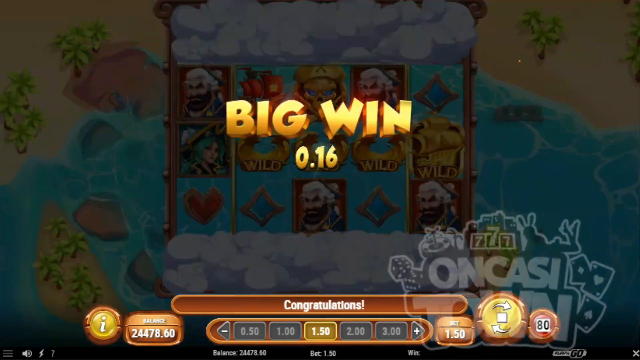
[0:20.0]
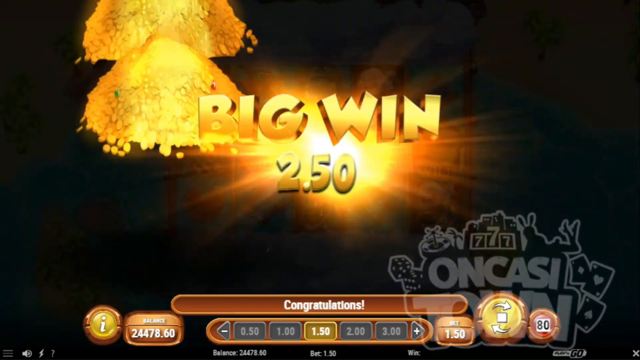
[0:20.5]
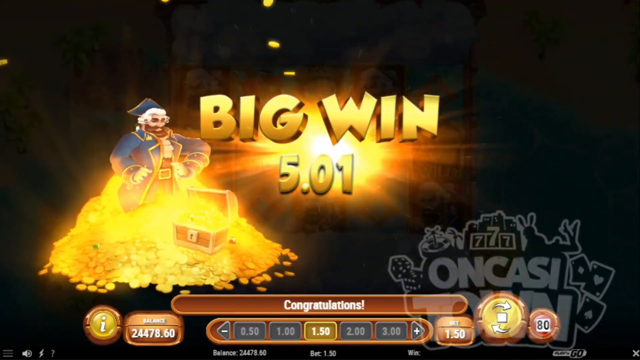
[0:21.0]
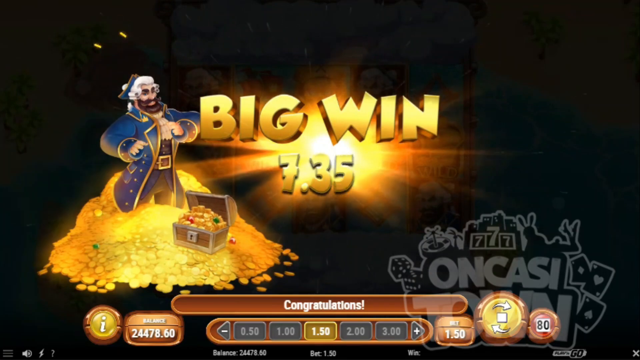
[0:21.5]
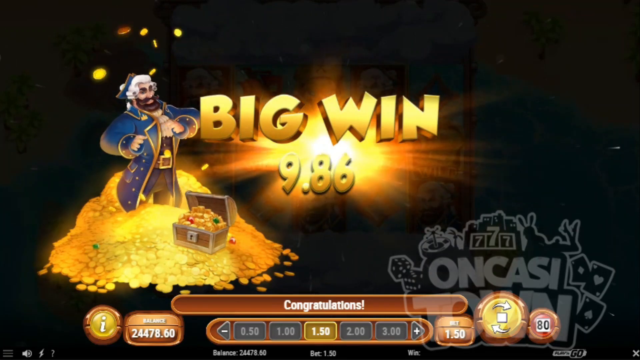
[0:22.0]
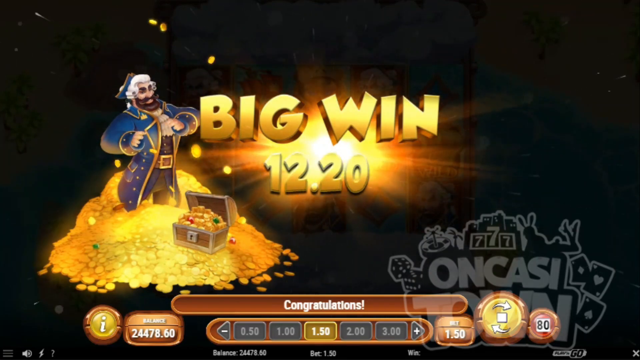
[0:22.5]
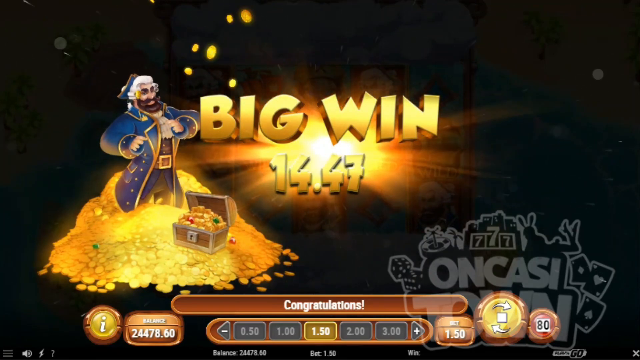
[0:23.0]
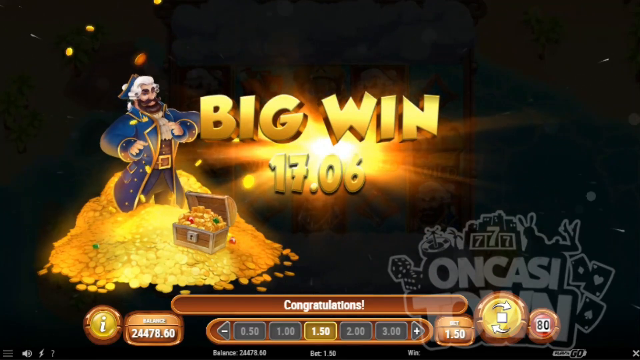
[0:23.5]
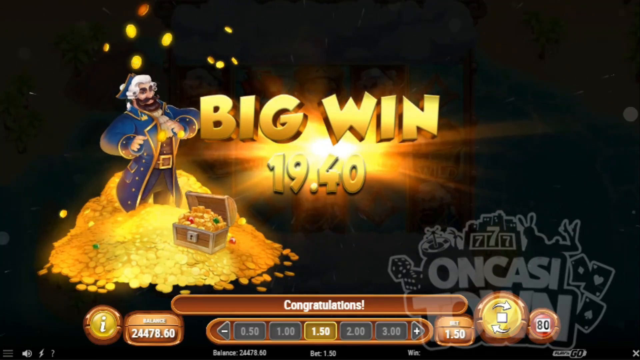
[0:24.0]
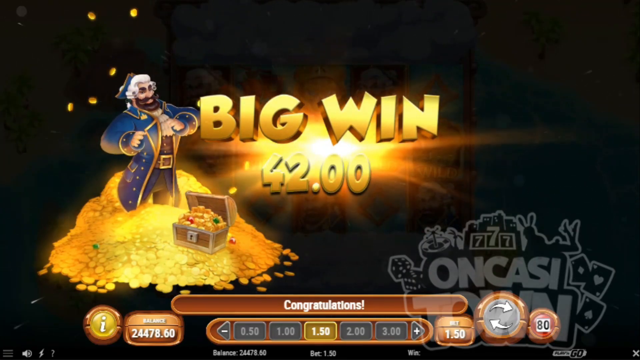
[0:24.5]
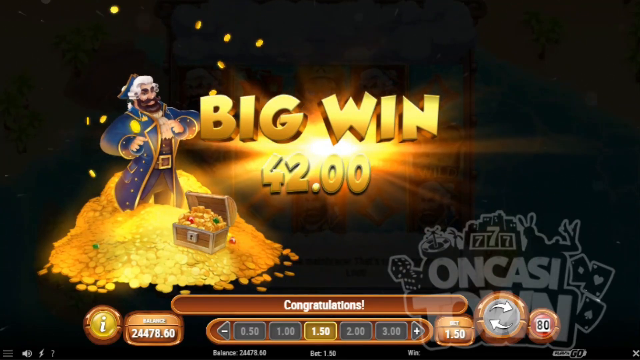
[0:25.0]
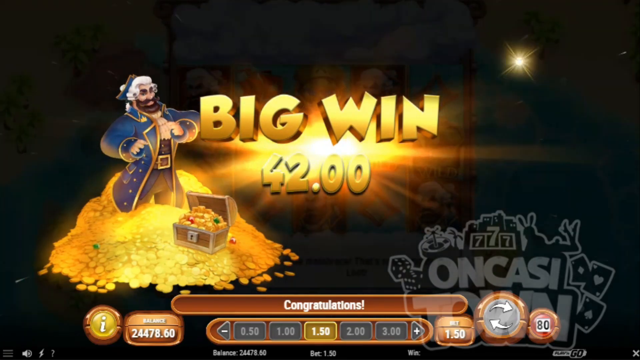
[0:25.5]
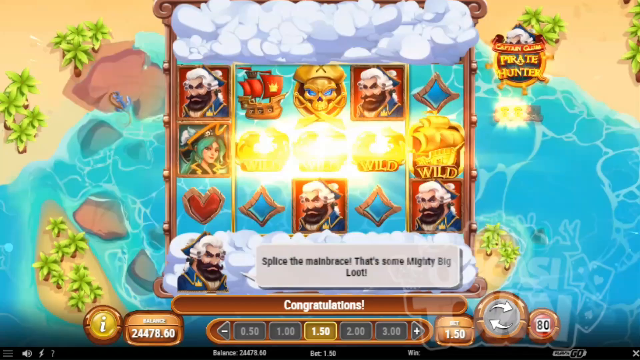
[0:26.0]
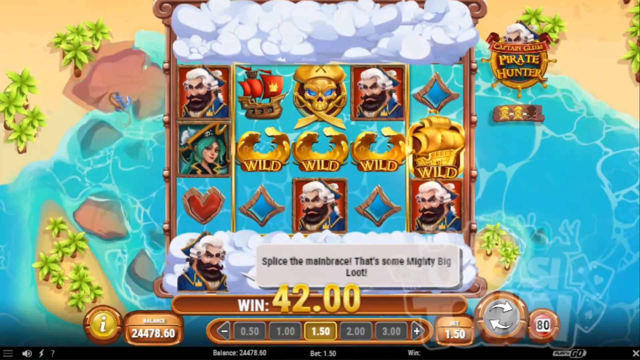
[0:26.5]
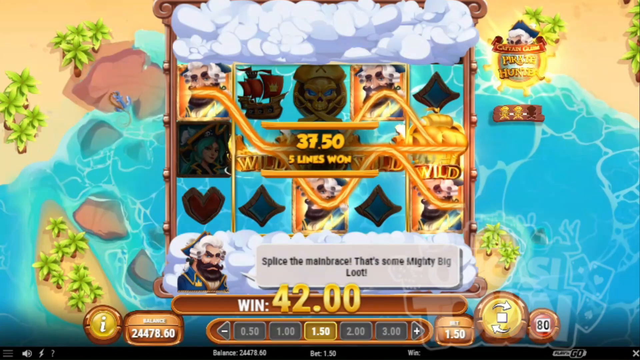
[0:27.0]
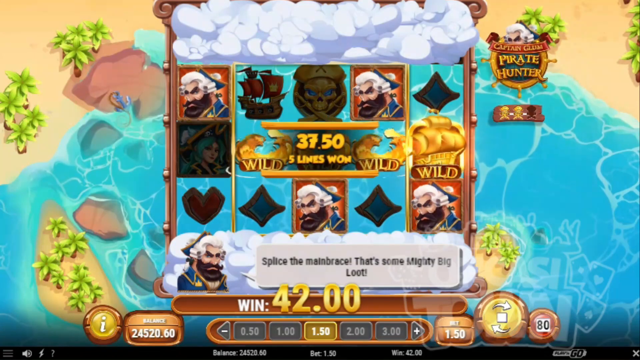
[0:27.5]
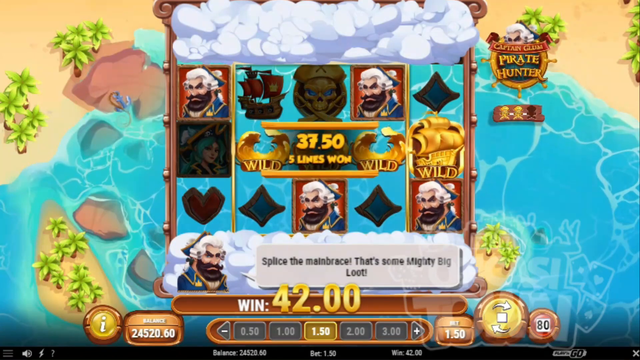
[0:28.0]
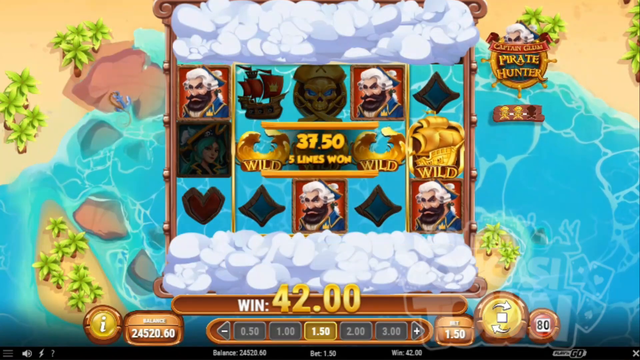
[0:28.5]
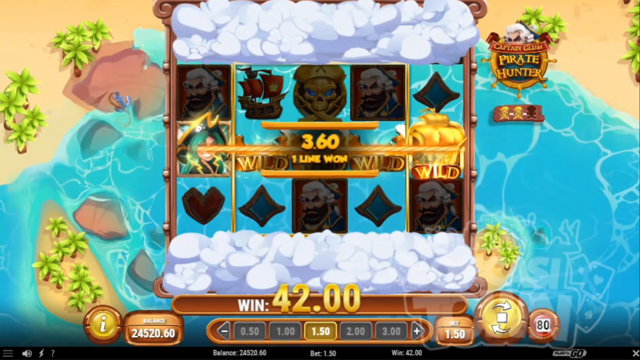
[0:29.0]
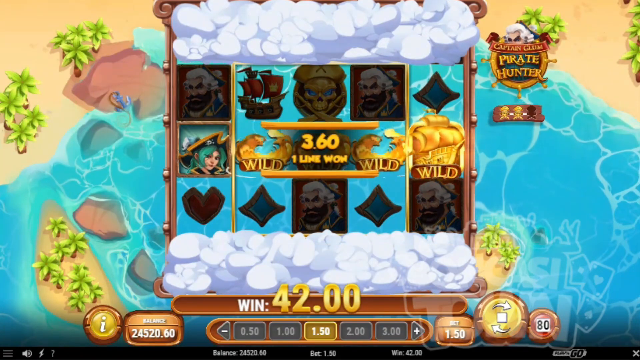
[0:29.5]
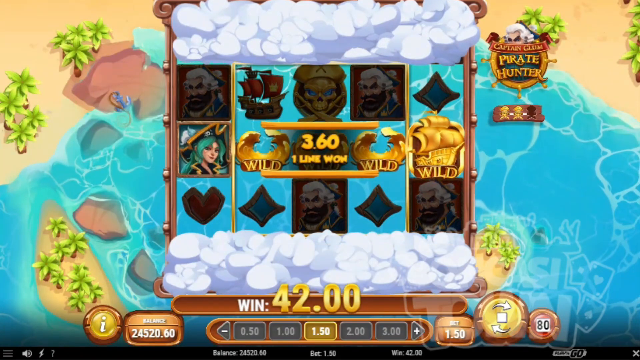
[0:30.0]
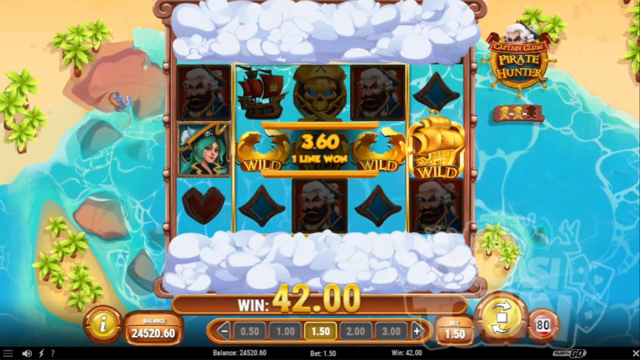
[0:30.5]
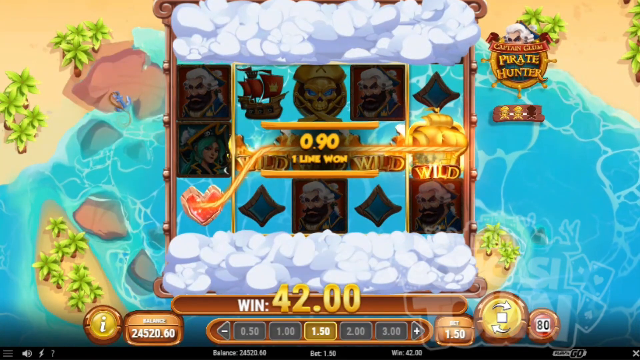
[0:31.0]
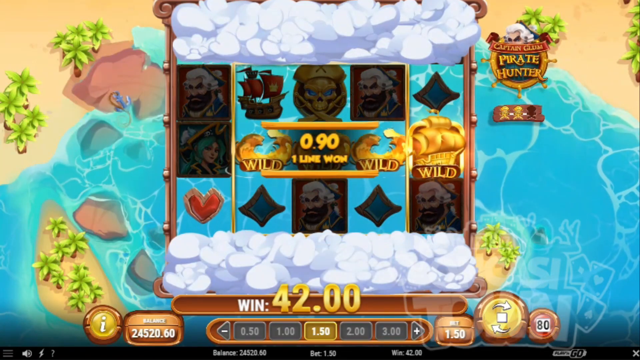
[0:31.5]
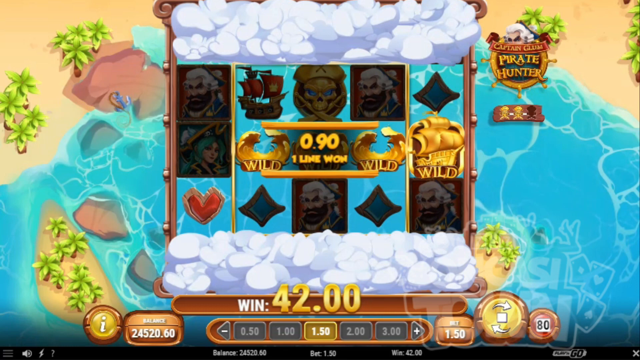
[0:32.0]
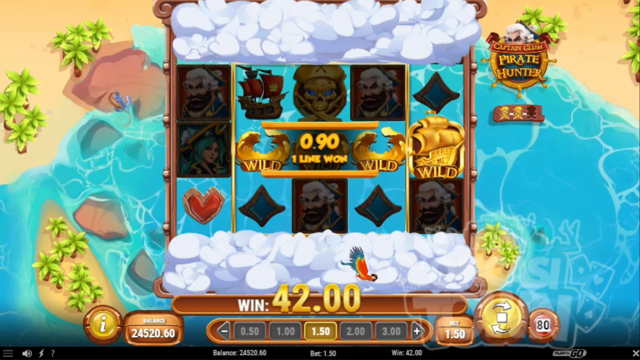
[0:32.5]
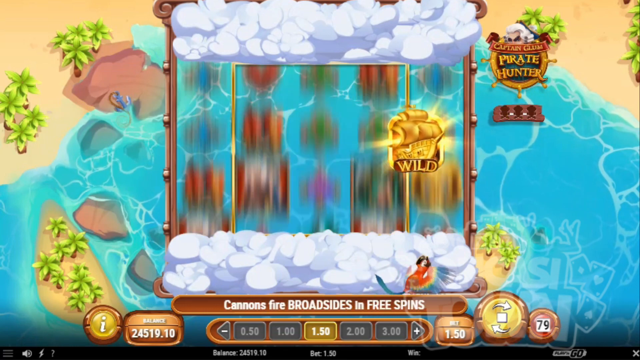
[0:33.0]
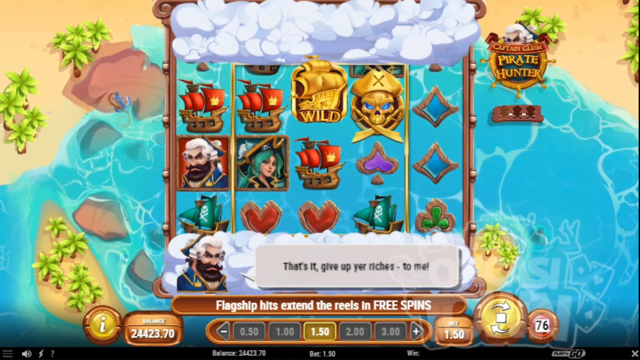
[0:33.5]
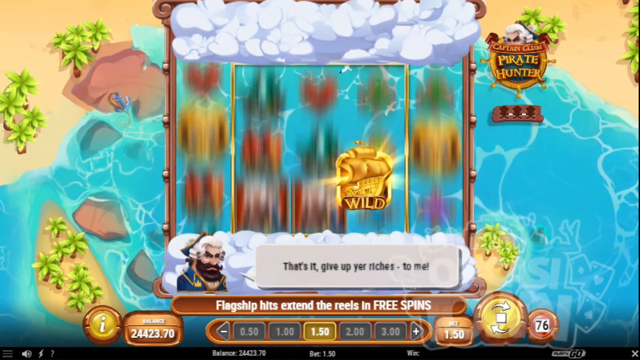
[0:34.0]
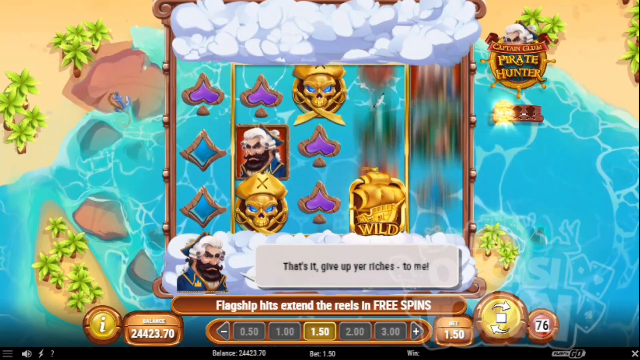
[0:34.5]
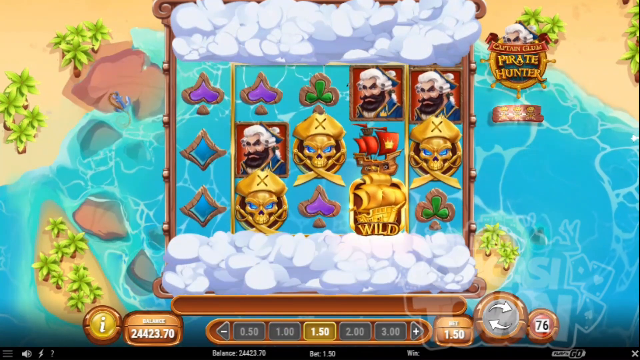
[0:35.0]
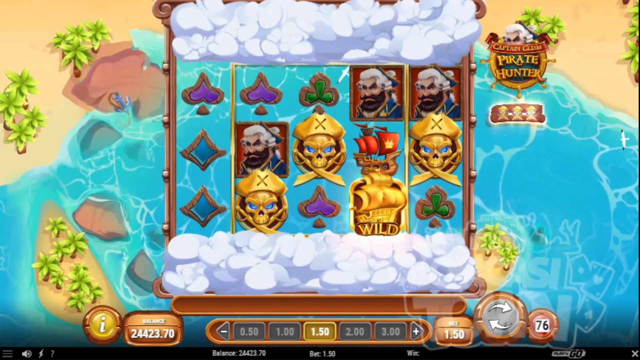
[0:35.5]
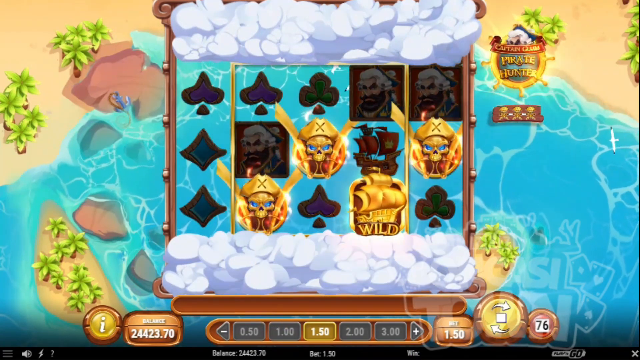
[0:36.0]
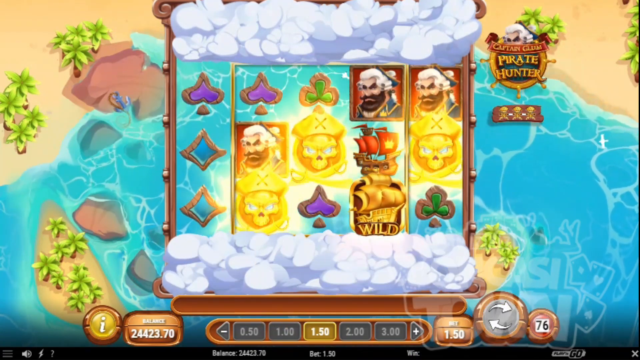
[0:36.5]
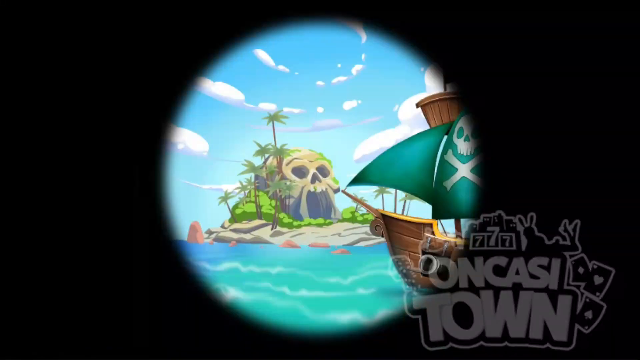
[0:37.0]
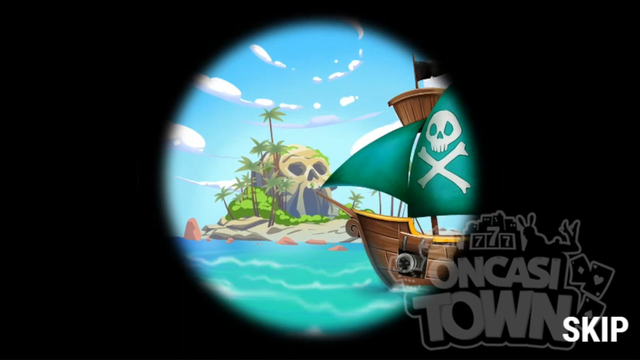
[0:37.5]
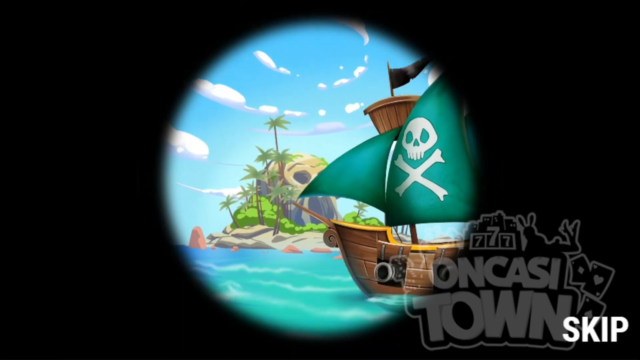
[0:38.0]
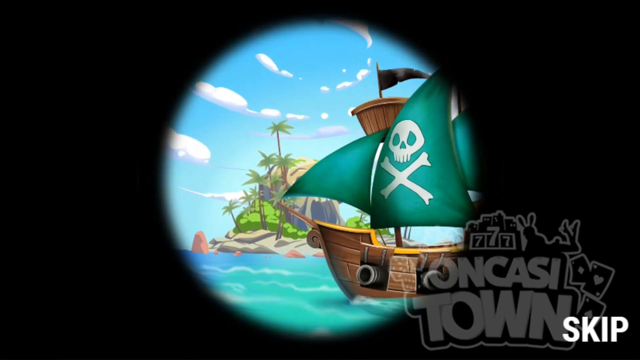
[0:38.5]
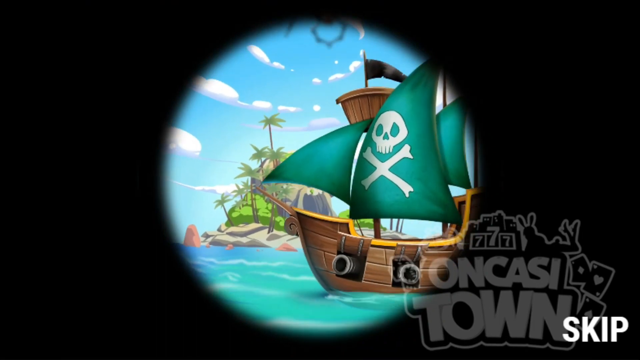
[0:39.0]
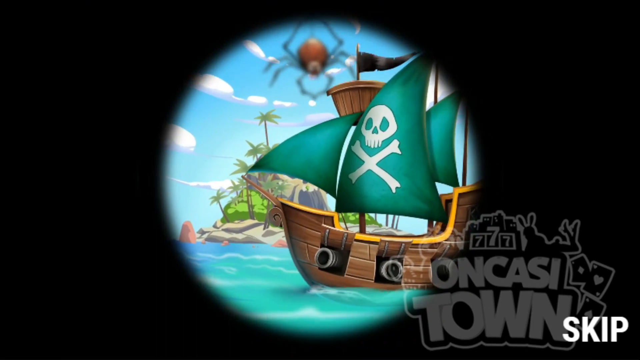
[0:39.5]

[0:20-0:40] A big win graphic is on the screen, with the rest of the picture knocked back 50% to black. It says "big win" in gold with "0.16". As it animates on, the pirate jumps down and climbs over his gold treasure while the number counts up to 42.00. After the animation the view returns to the game, where four pirates have just landed, and various scoring options come up on the screen; the five columns slide past, and when they stop the scores due are shown. A transition then leads to a vignetted picture of a pirate ship going past a skull island, as if seen through a telescope: a circular wipe with a soft edge, the outside of the image black. A little pirate ship with a green sail sails past, and a giant spider drops down, apparently marking entry into another part of the game.